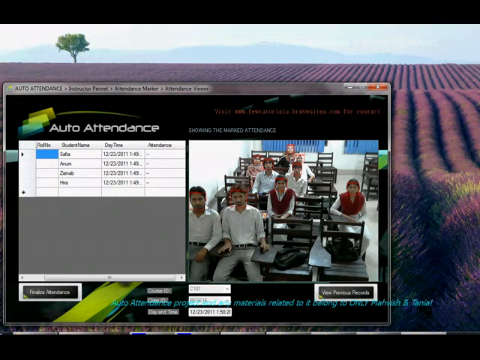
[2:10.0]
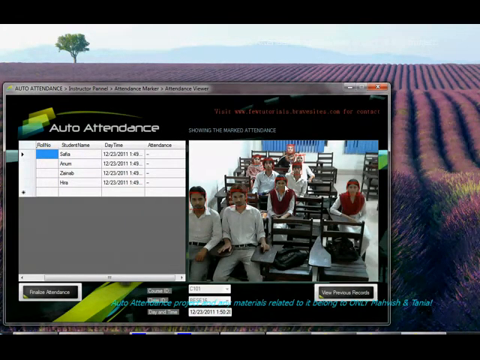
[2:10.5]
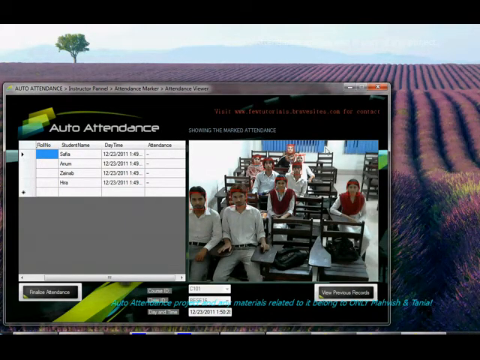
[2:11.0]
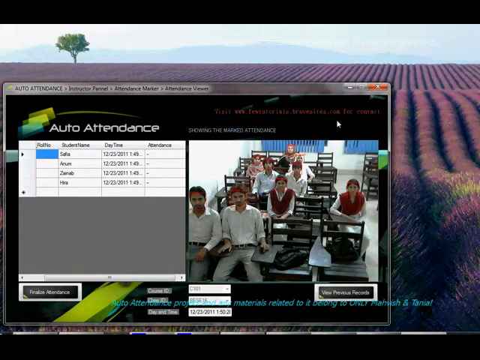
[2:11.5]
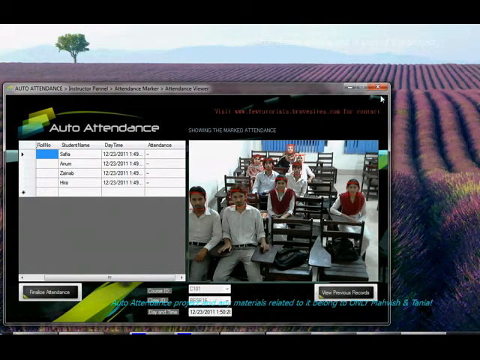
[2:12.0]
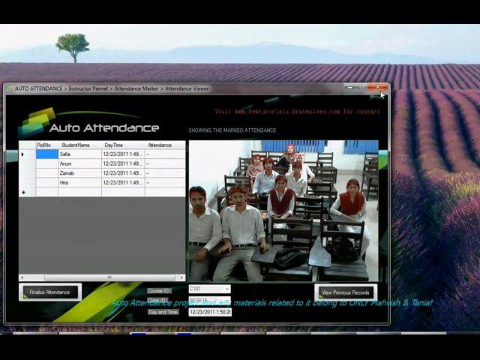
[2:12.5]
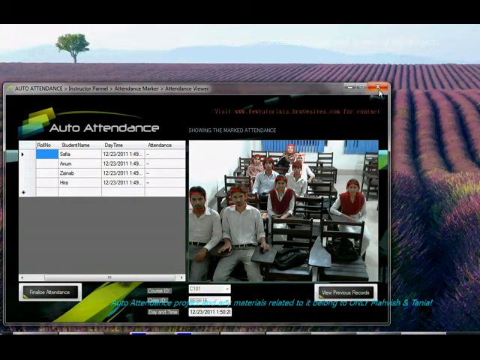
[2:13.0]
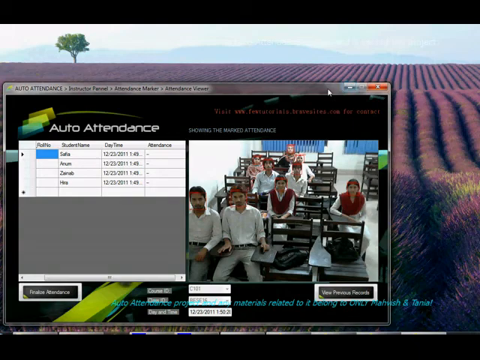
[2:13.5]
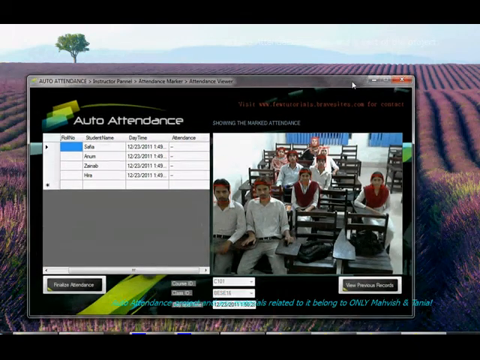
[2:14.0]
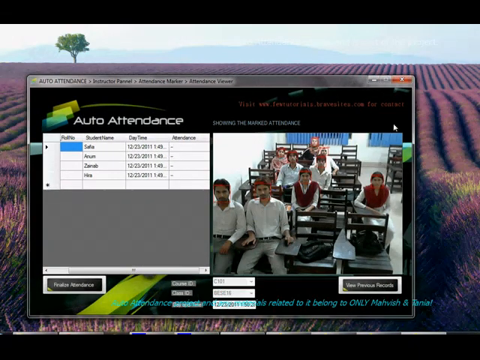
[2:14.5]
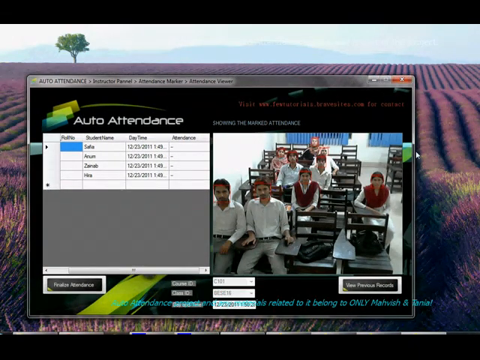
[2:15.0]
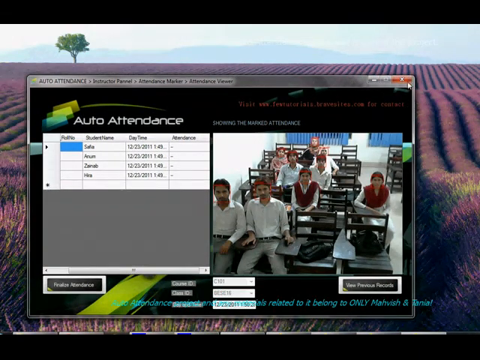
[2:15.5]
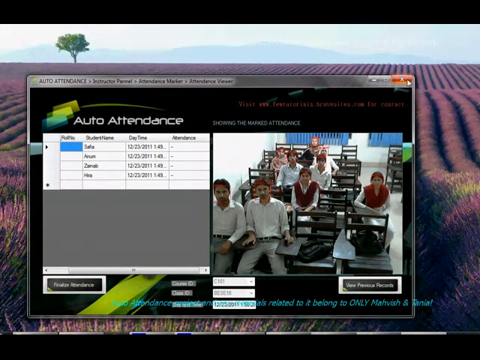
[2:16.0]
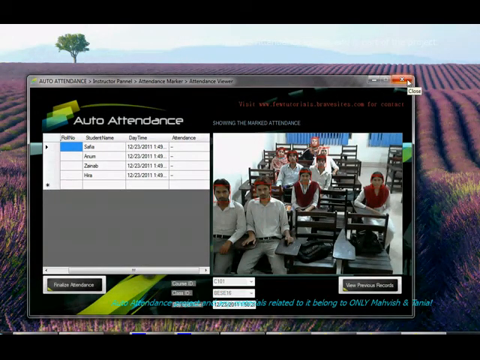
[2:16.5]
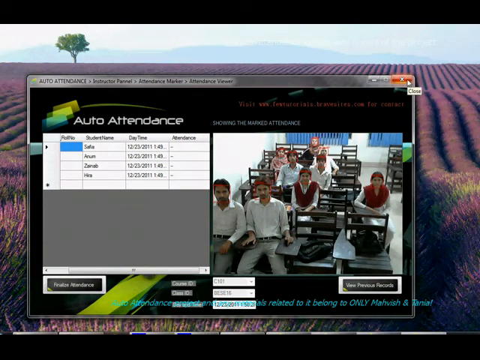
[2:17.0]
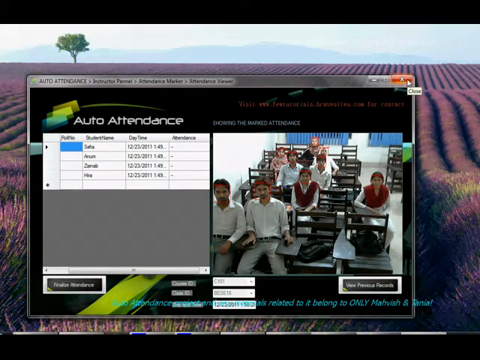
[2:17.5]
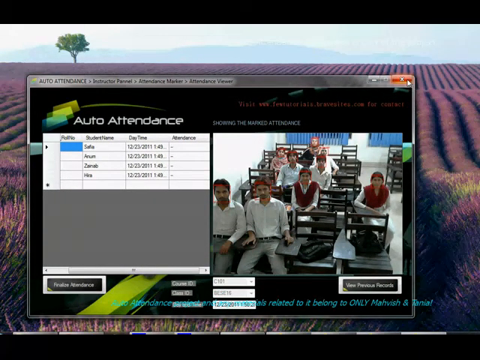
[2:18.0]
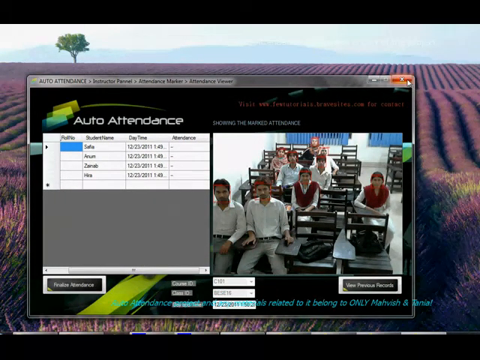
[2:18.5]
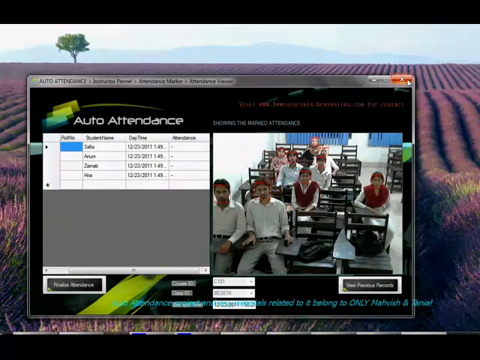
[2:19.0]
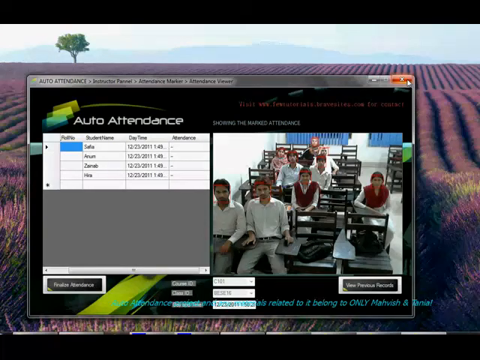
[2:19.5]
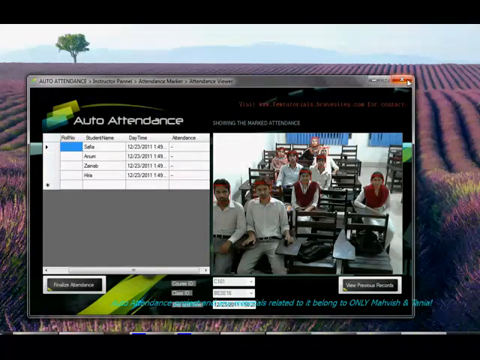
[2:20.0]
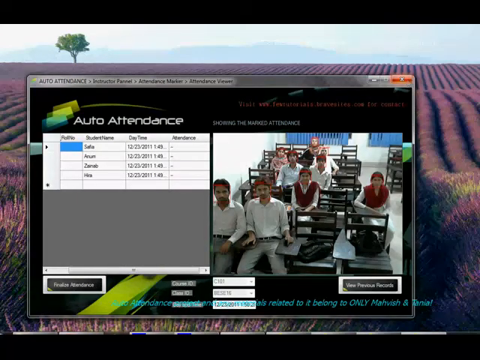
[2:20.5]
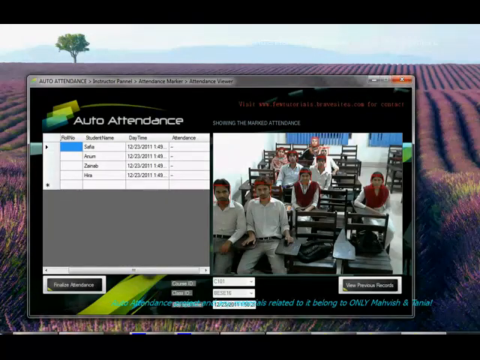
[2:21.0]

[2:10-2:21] Each student is apparently assigned a profile, with the name matching an entry in something like an Excel spreadsheet. He clicks through, showing only a single picture, and then the view changes so more of the background is visible: rolling fields of purple flowers, with a green tree sticking up into the sky. The students' faces are marked with what look like red circles. He moves the screen a little, goes to close it out, and then slides the screen again. An auto attendance project message appears at the bottom in a teal blue color. The students sit awkwardly, with two sitting really close together and two spread out.